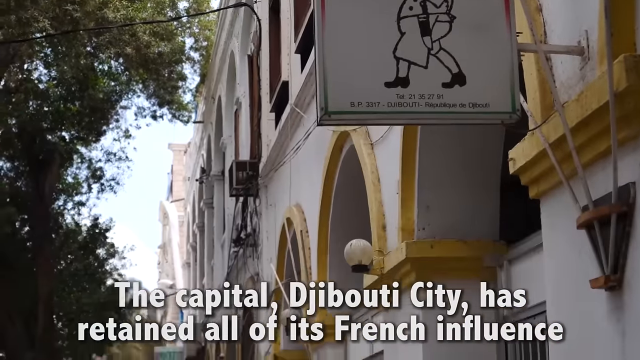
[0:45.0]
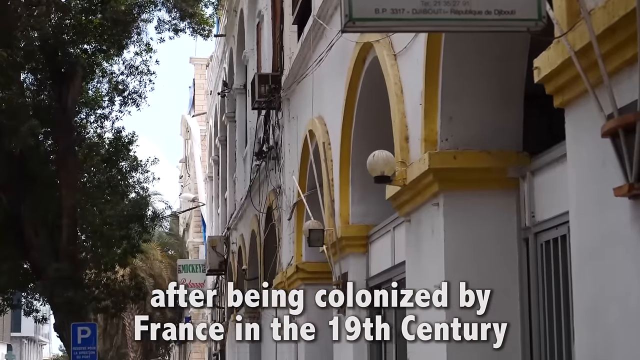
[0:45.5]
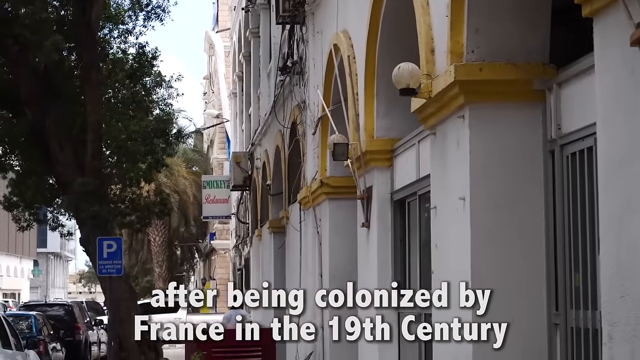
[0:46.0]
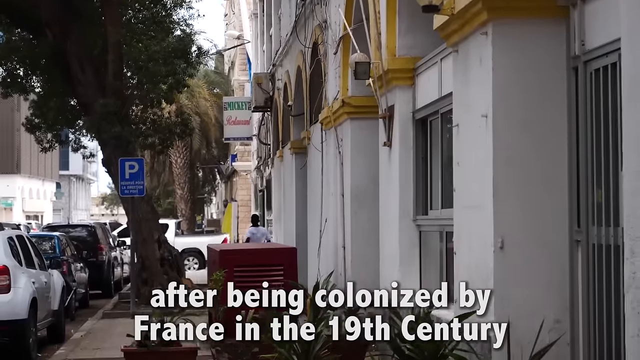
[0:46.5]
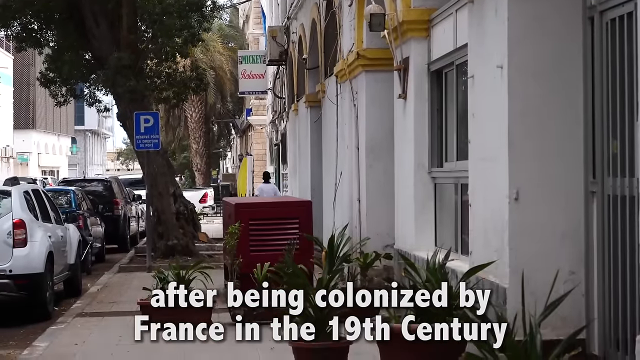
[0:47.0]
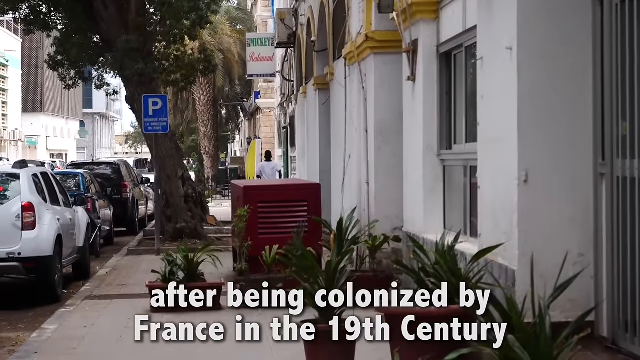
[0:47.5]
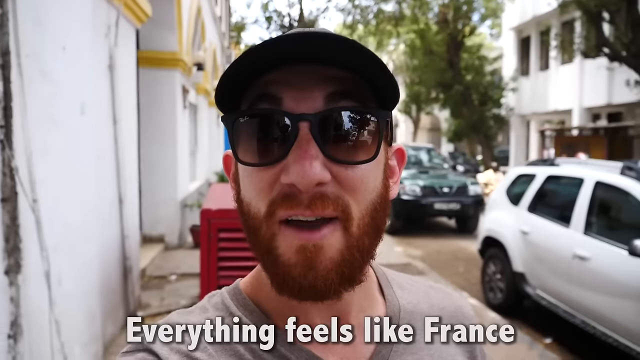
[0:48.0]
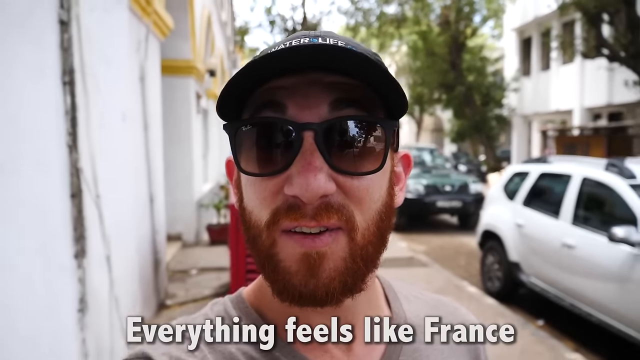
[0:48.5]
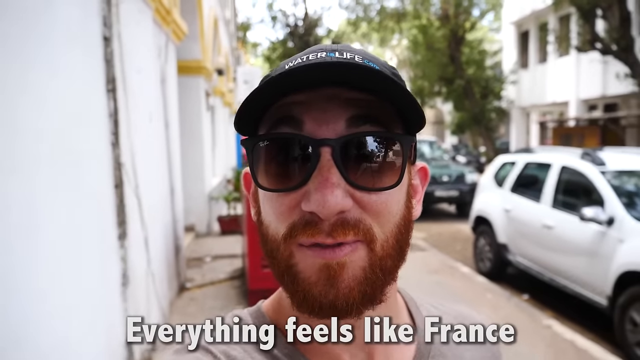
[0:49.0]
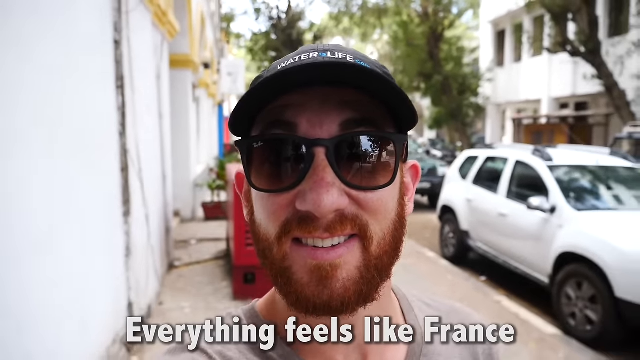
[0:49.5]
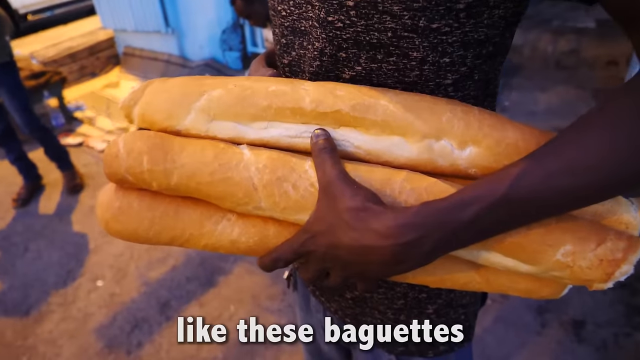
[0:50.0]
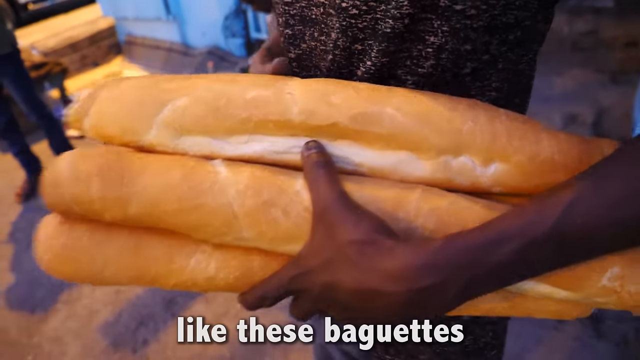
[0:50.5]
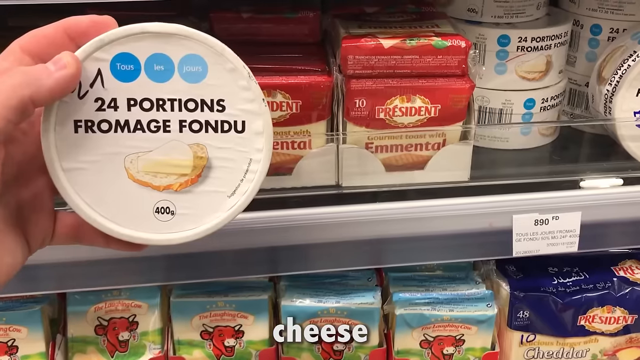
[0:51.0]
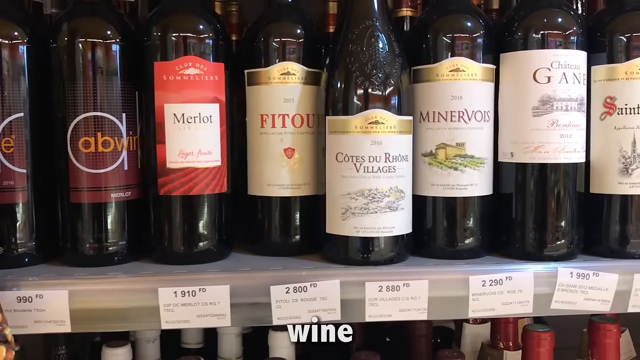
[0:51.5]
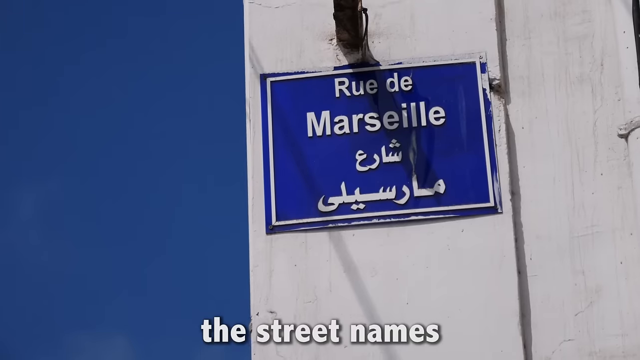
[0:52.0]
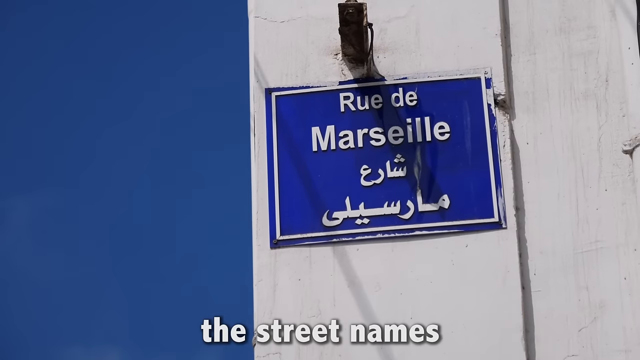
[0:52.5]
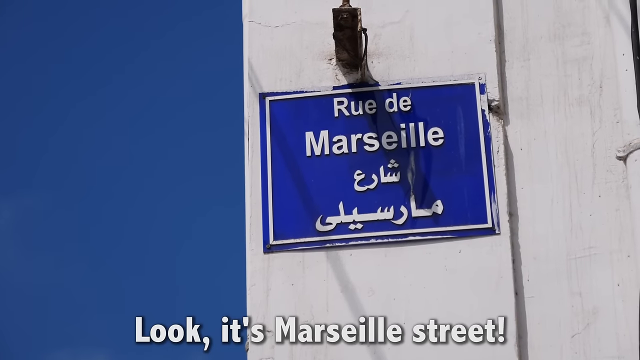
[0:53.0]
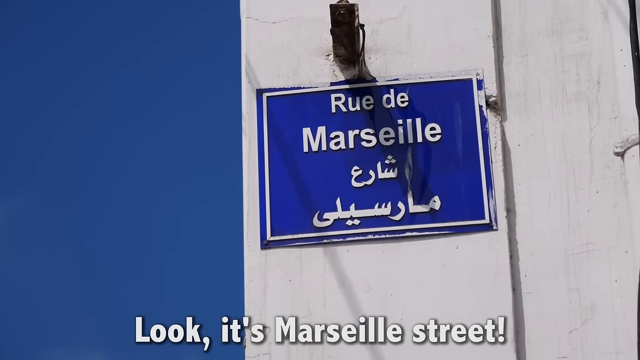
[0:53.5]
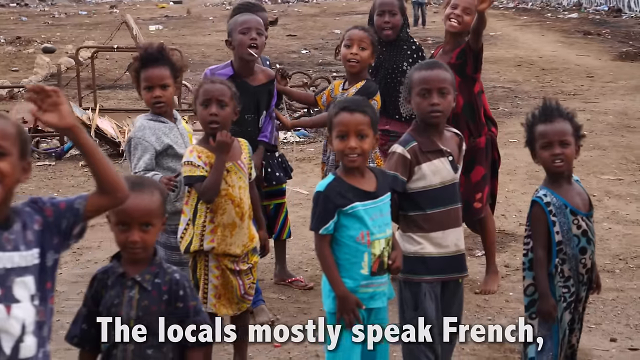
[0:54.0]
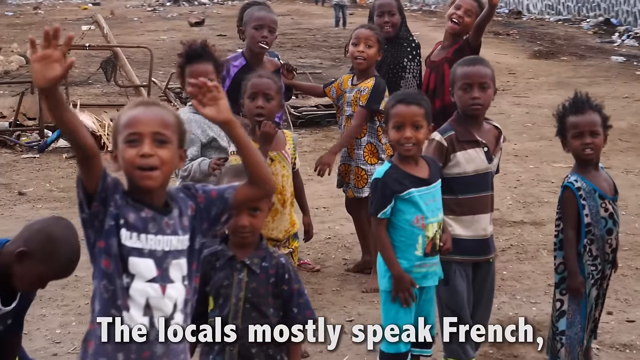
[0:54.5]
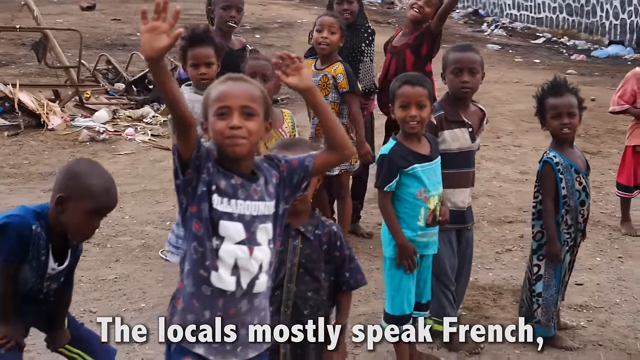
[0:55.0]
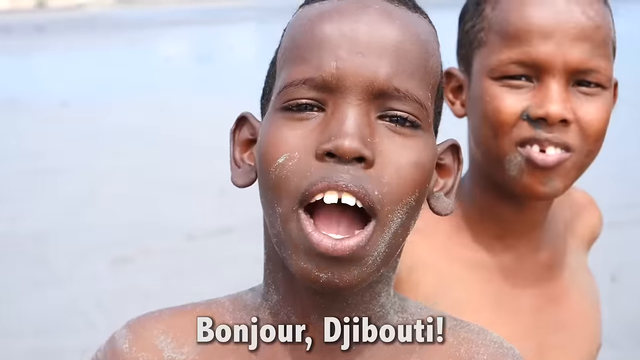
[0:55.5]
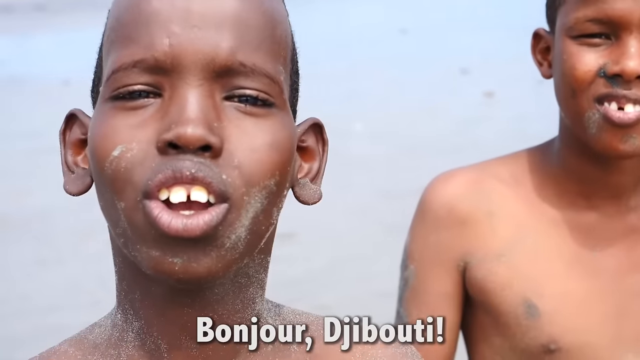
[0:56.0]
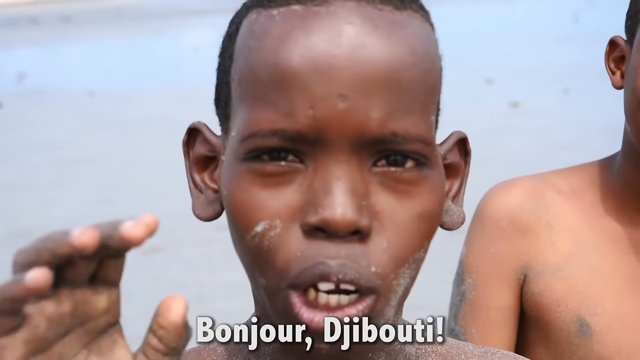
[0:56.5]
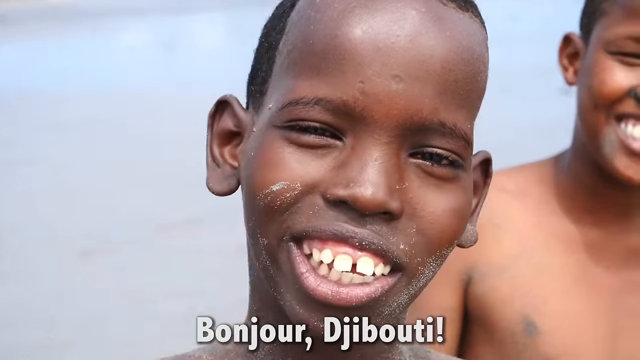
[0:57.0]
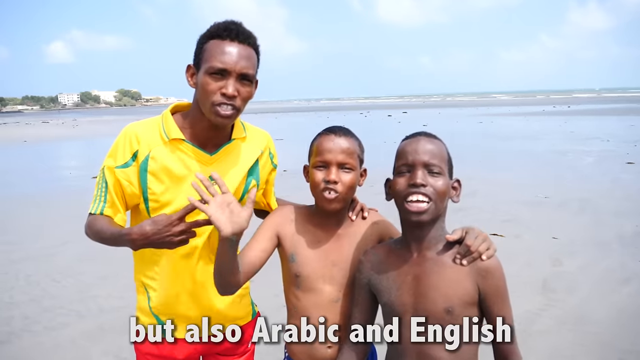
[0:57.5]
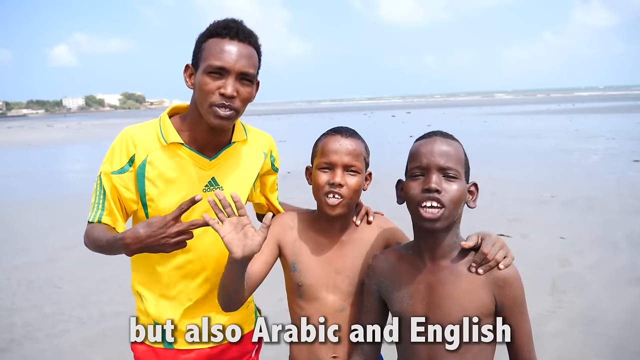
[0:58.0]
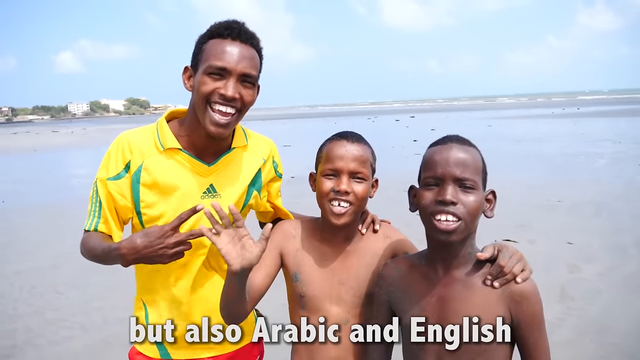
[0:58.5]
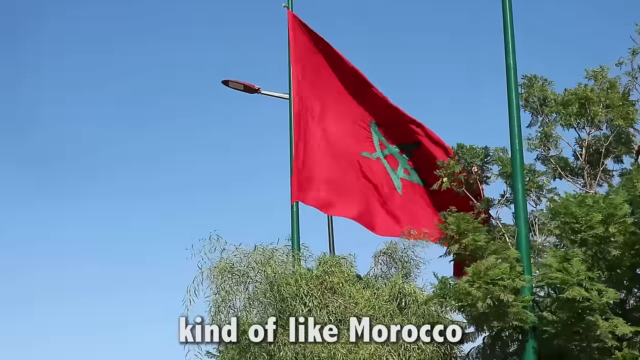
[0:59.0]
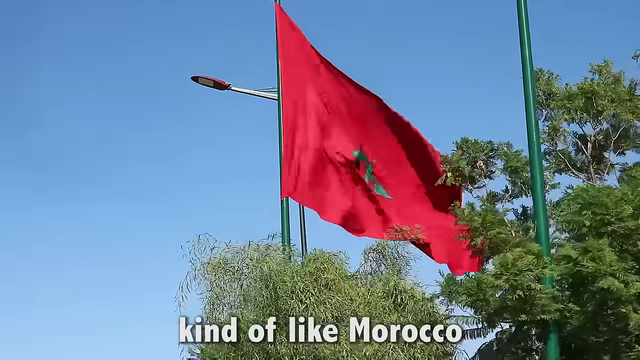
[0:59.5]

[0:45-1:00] He is outside the French restaurant. A sign reads "Rue de Marseille" in French, with Arabic writing on it as well. Kids wave from the beach as the shot returns there. Text says the country was colonized after the 19th century. Someone holds baguettes, and then the inside of a restaurant or market is shown, with cheese and shelves of wine. He says everything feels like France. Some children and a man on the beach say bonjour. There are lots of children. Text mentions Morocco, but the shots move too fast to read it. Text also indicates that the locals speak English, Arabic and mostly French.